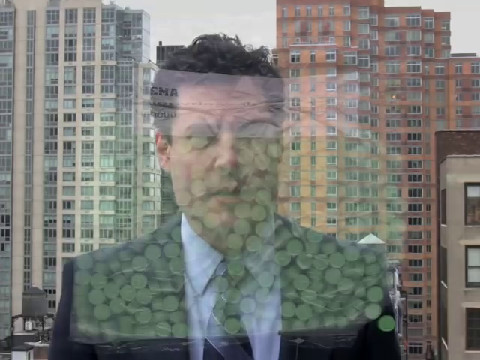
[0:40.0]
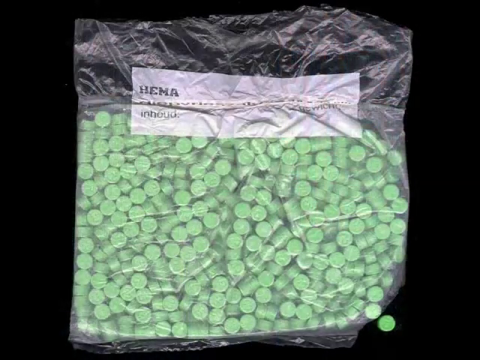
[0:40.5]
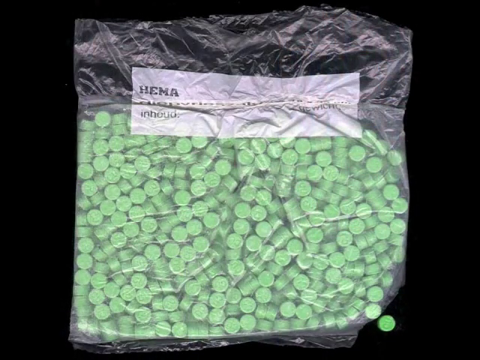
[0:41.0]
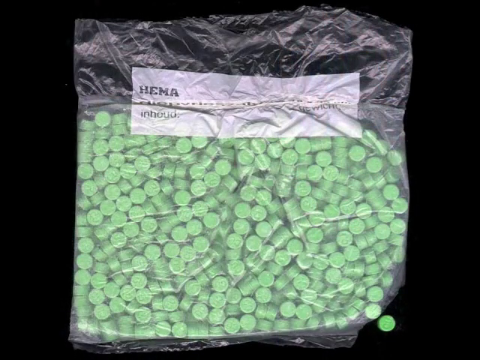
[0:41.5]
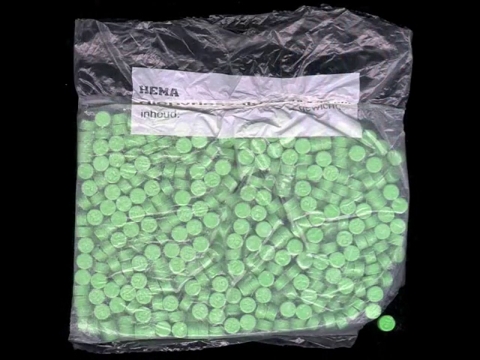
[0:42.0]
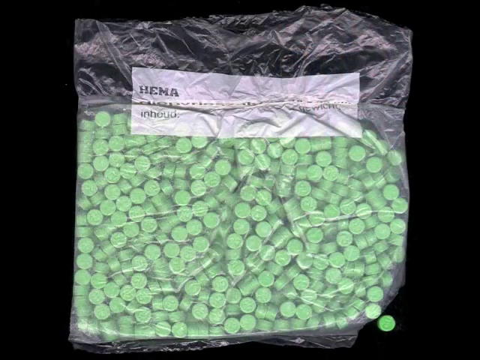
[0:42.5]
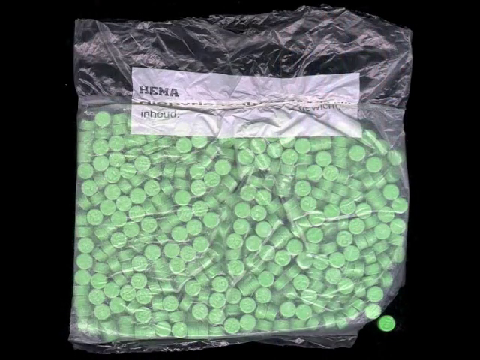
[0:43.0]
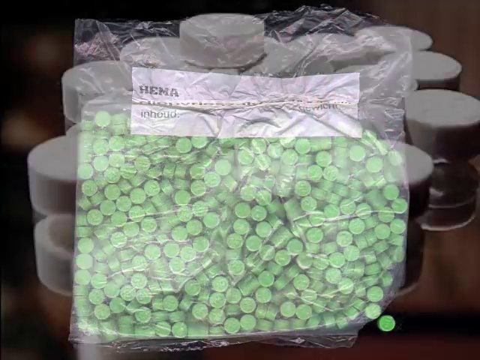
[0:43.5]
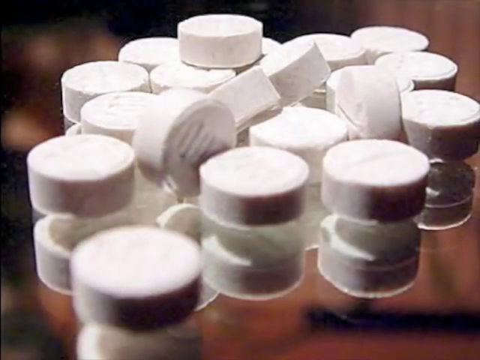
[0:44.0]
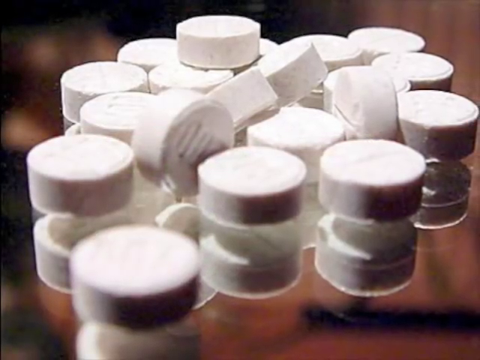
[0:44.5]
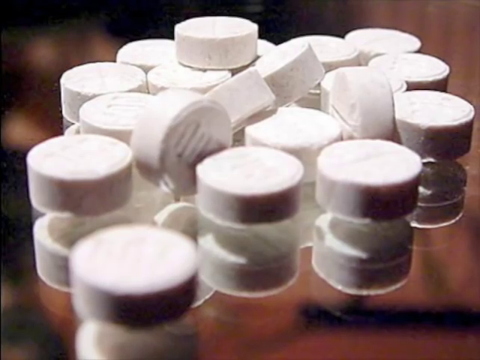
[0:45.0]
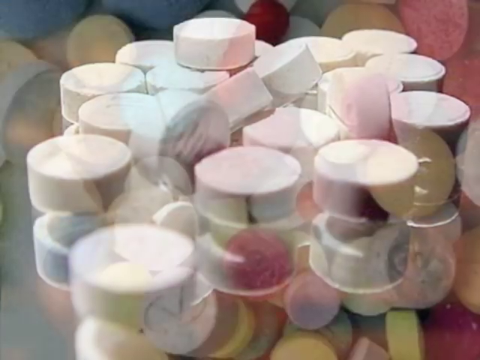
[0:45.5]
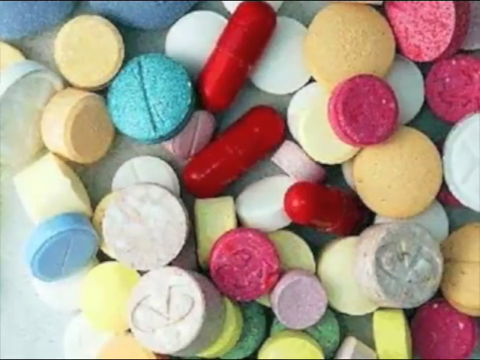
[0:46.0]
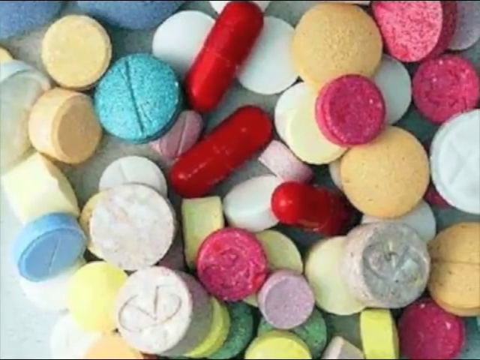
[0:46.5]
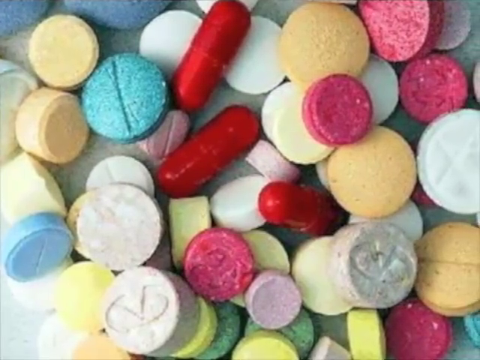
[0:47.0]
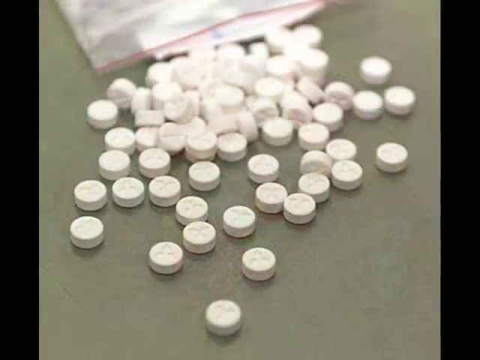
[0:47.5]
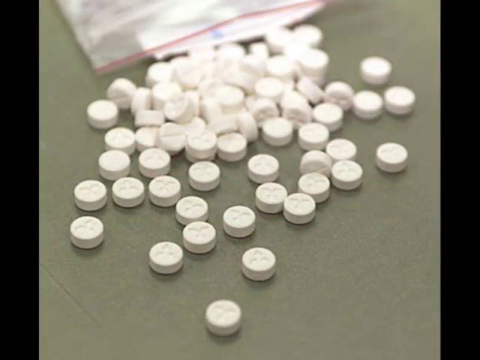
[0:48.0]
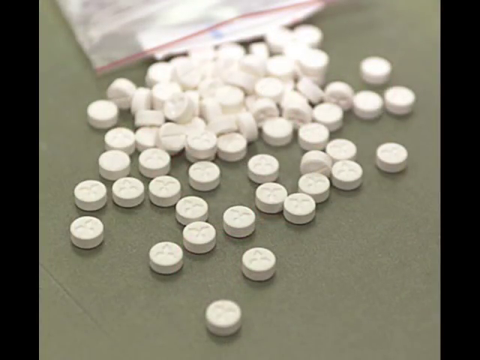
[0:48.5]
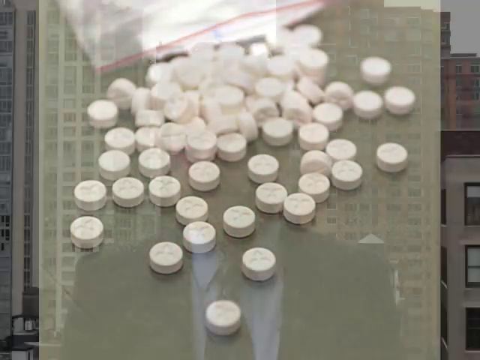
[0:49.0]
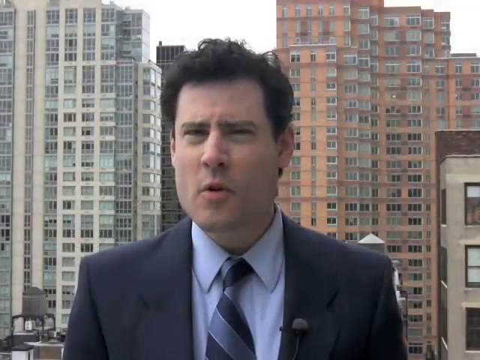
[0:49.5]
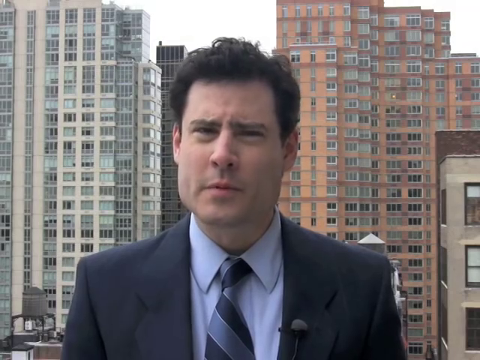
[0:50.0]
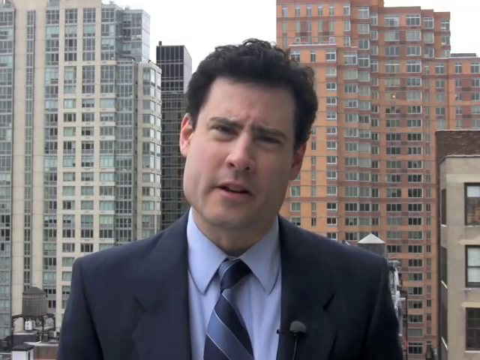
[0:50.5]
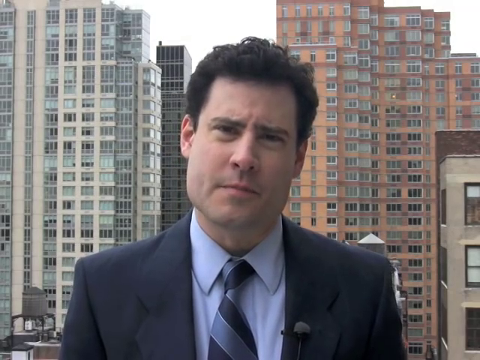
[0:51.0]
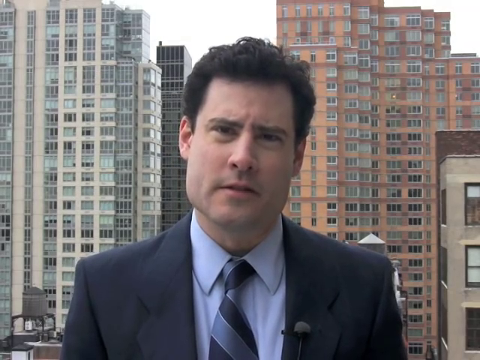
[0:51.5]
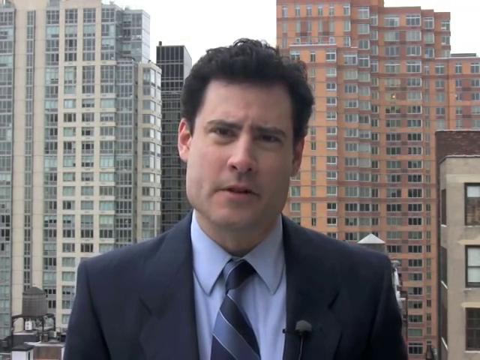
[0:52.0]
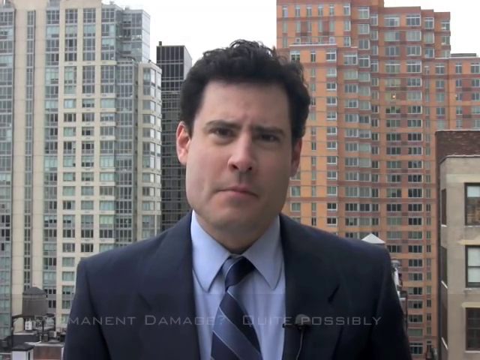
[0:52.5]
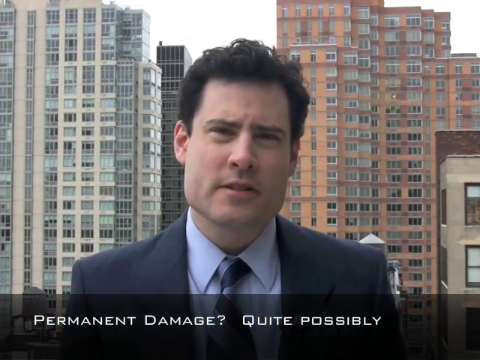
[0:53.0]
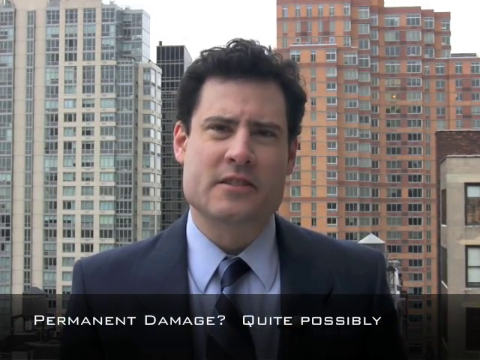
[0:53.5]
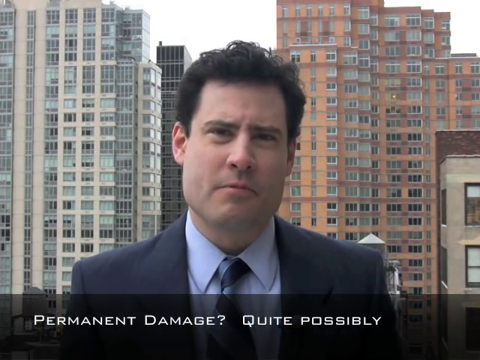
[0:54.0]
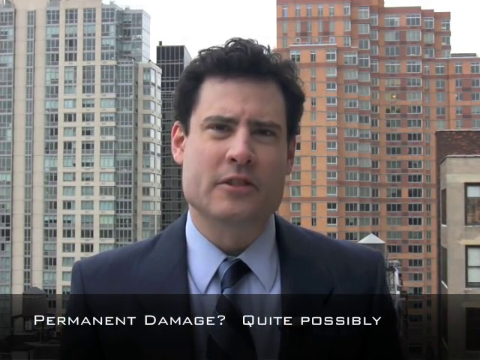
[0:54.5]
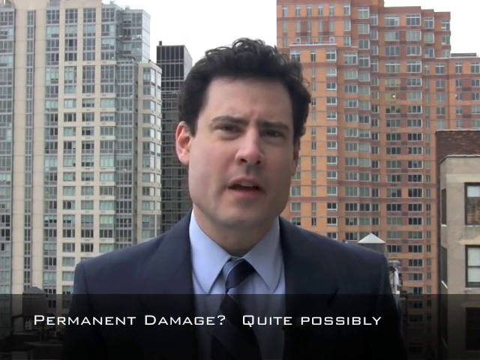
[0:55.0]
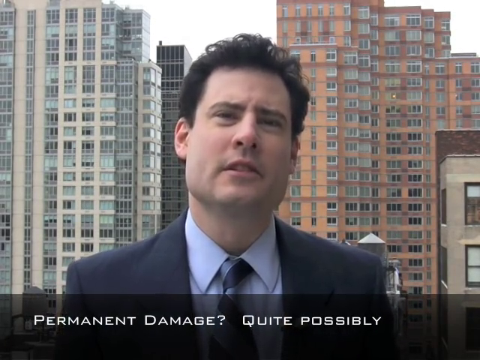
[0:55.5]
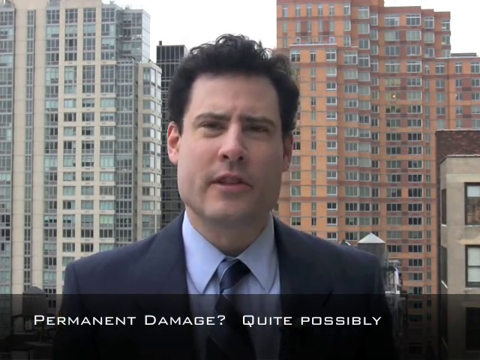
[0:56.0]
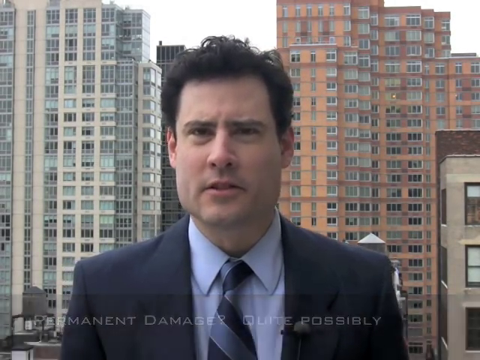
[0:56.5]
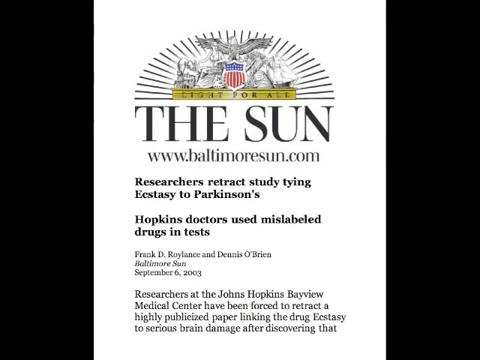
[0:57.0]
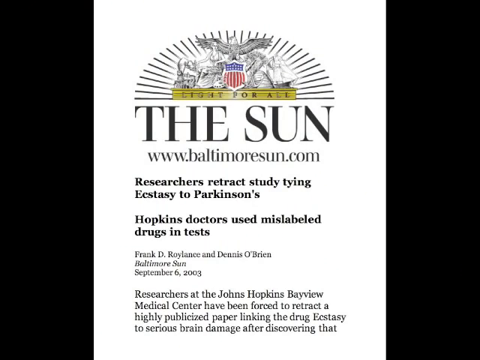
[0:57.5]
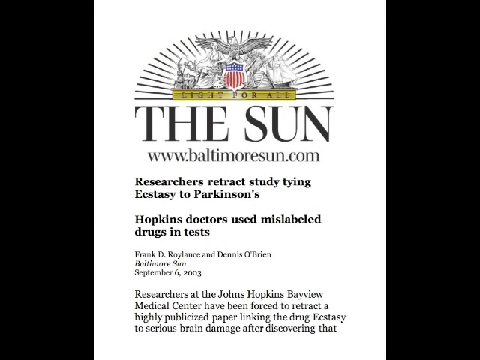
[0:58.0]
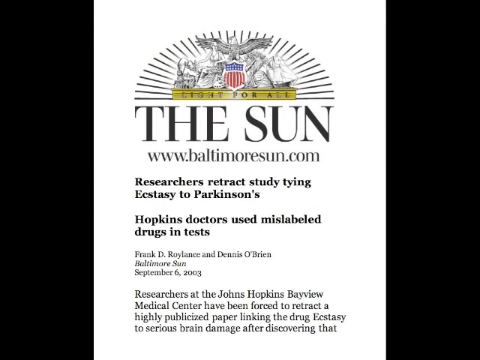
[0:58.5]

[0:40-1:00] A very professional-looking man in a suit appears, with a high-rise cityscape of glass windows behind him in daylight. He looks to be in his mid to late 30s and looks directly at the camera. His dark brown hair is neatly done and a bit slicked back; he is perhaps a news person. He wears a blue collared shirt, a blue striped tie and a dark suit. Beneath his name, a black banner with white text reads "can you be permanently damaged by doing ecstasy?" Next comes an image of a clear plastic bag, against a solid black background, filled with at least hundreds of small, circular green tablets, perhaps the drug being discussed; a white label on the front of the bag reads "H-E-M-A". The following image shows pills of all different shapes and colors displayed on a counter, including red pills, blue tablets, red tablets and yellow tablets.